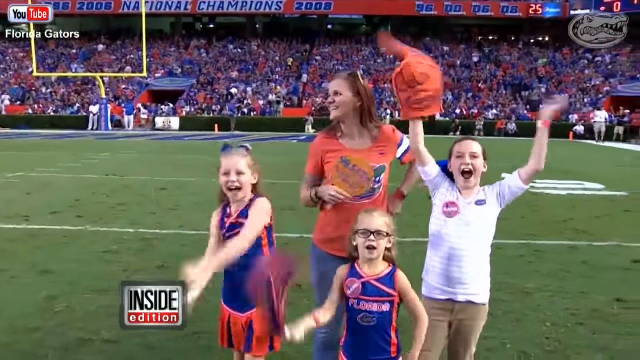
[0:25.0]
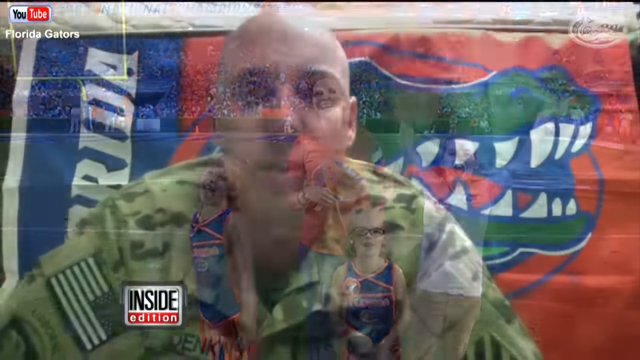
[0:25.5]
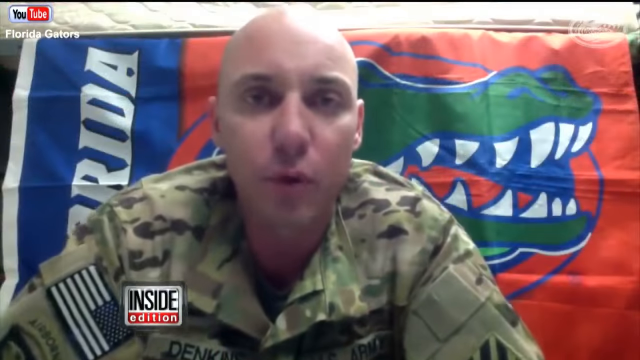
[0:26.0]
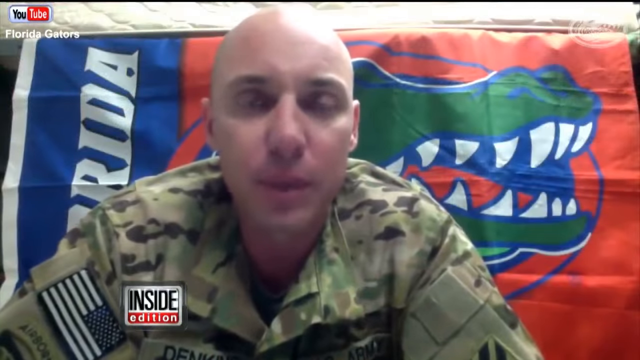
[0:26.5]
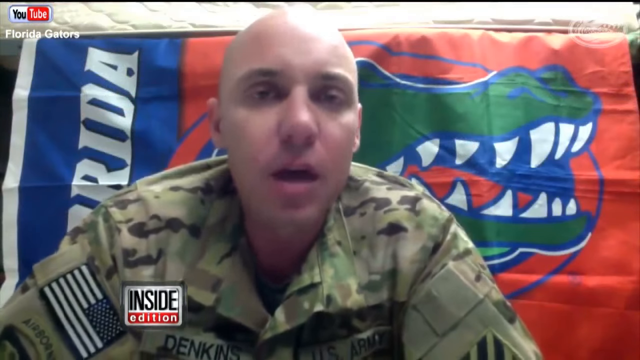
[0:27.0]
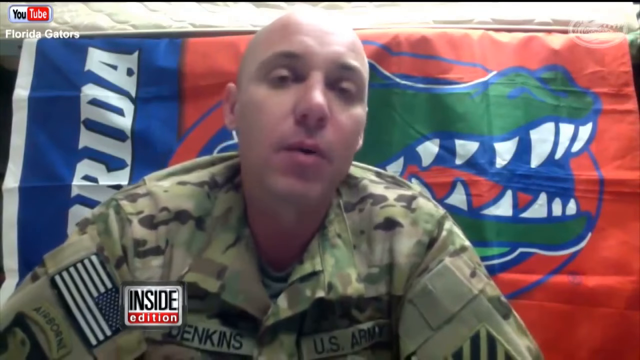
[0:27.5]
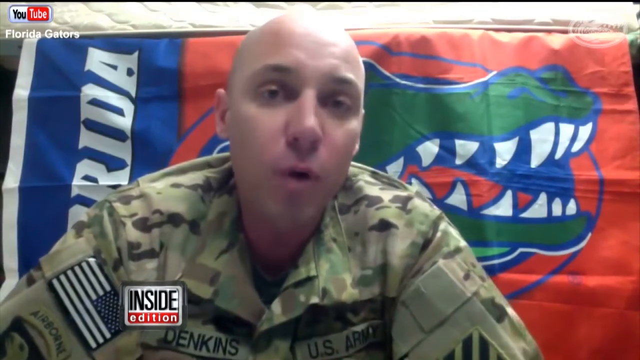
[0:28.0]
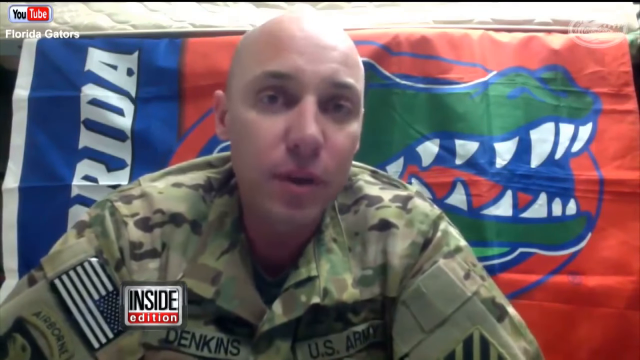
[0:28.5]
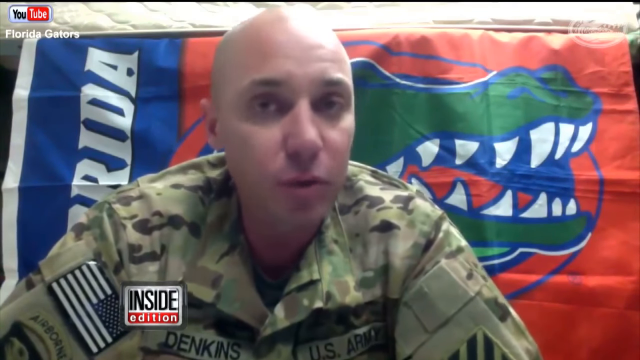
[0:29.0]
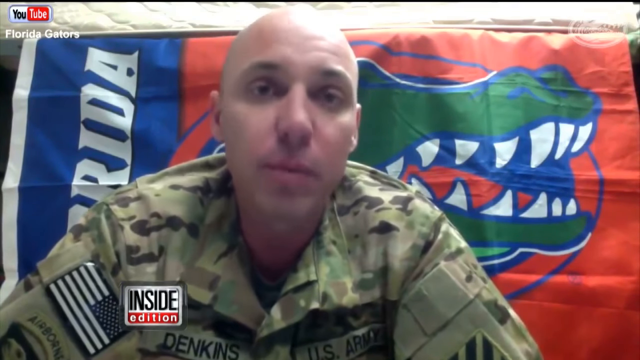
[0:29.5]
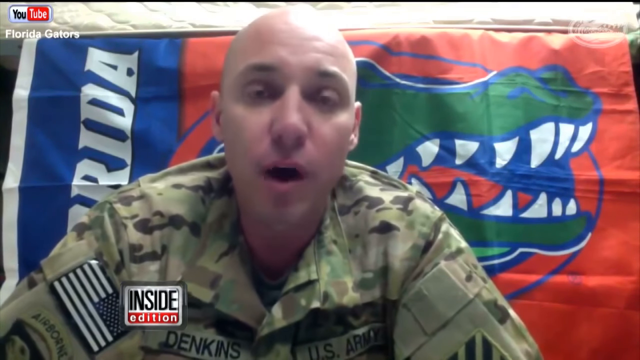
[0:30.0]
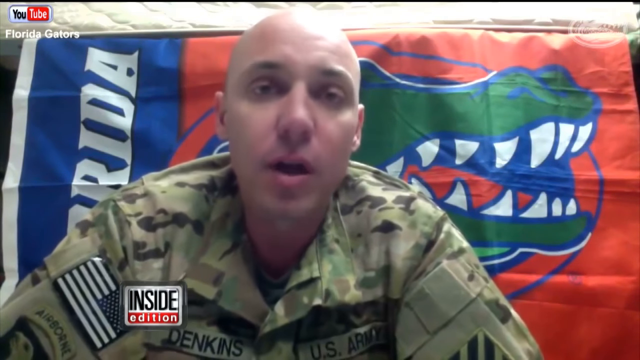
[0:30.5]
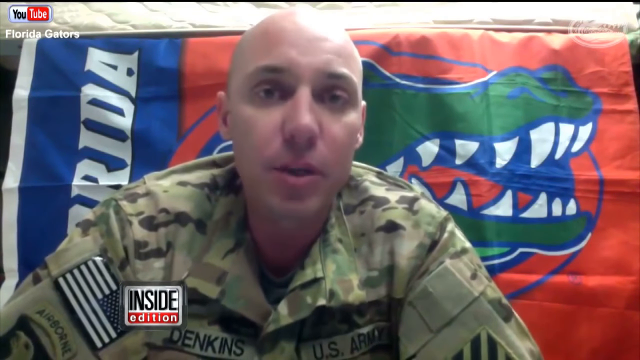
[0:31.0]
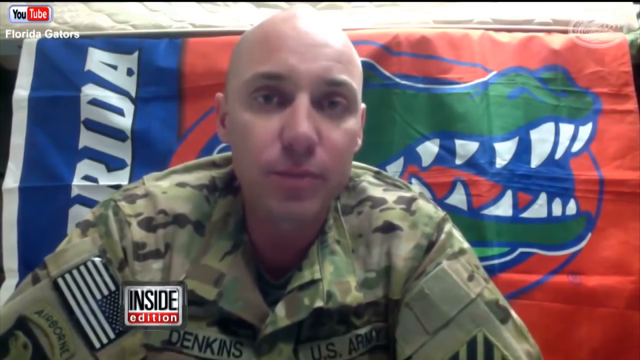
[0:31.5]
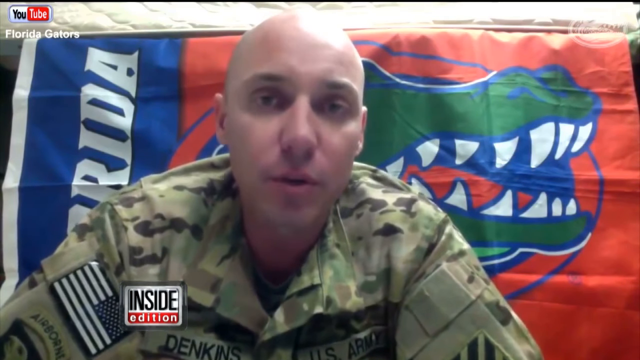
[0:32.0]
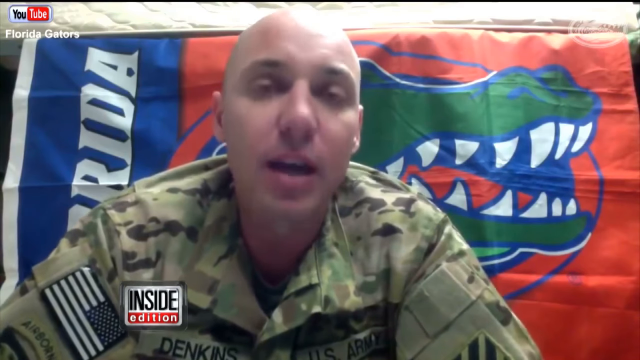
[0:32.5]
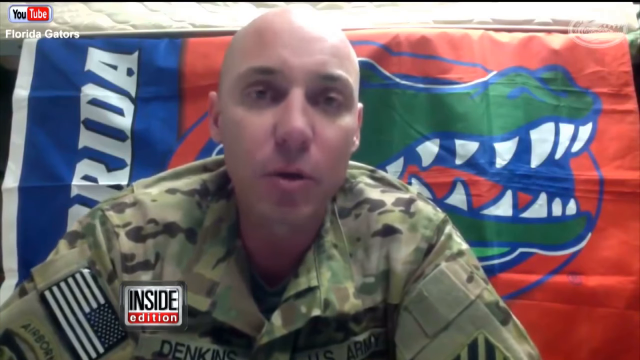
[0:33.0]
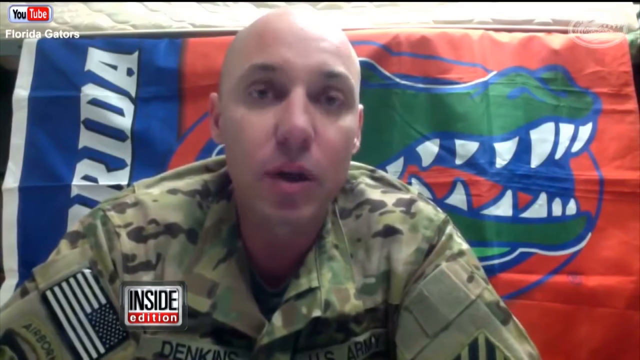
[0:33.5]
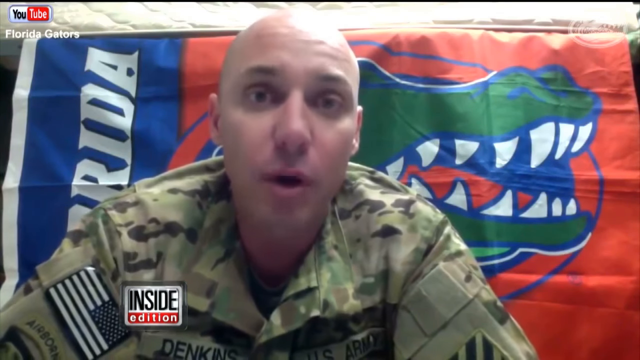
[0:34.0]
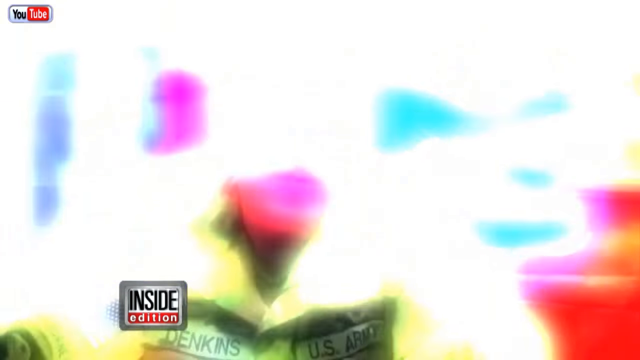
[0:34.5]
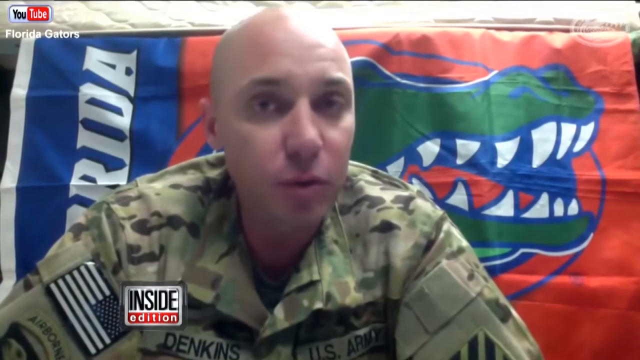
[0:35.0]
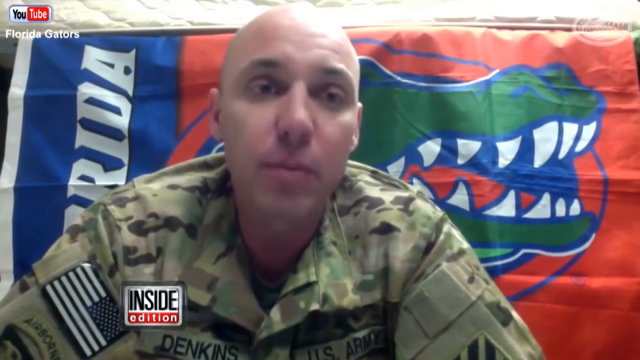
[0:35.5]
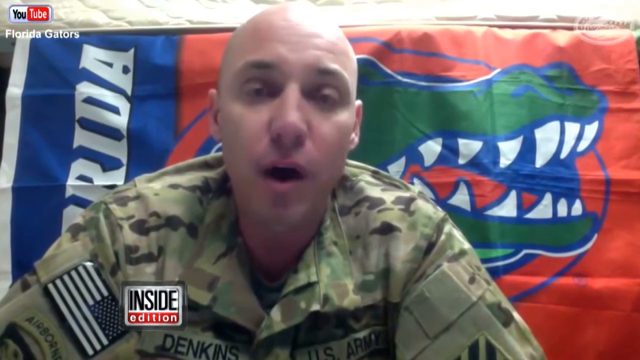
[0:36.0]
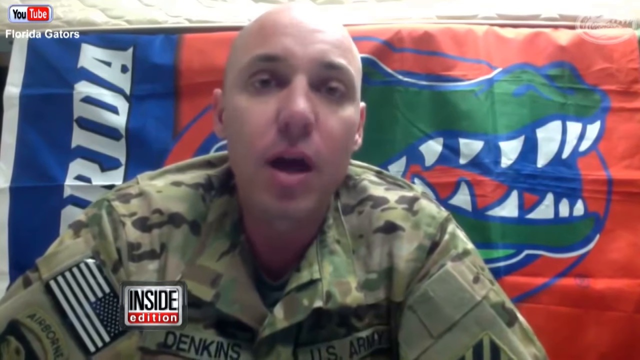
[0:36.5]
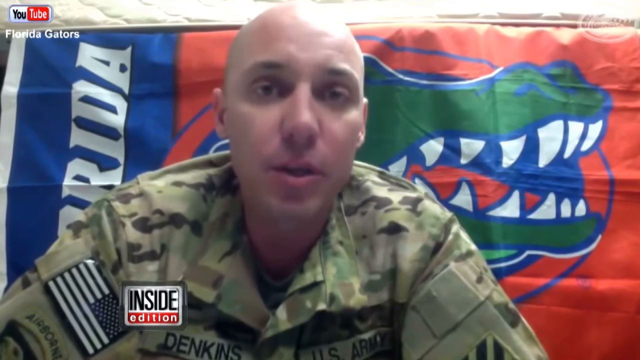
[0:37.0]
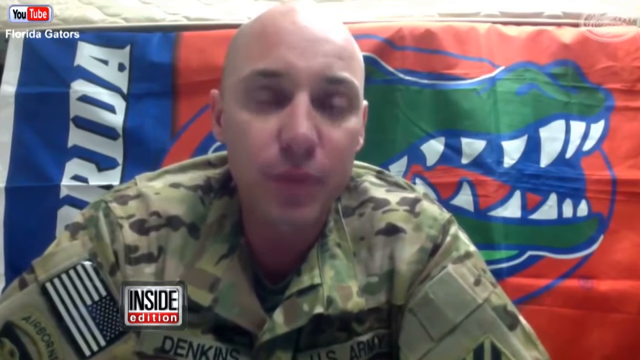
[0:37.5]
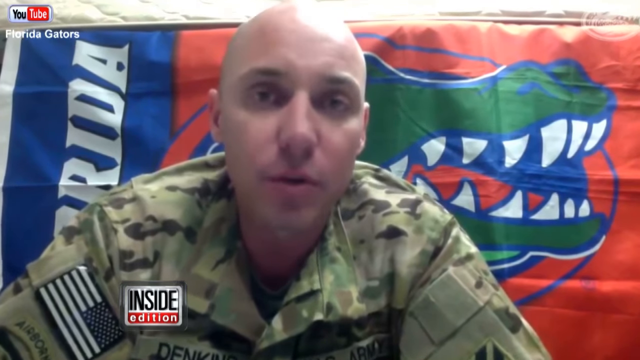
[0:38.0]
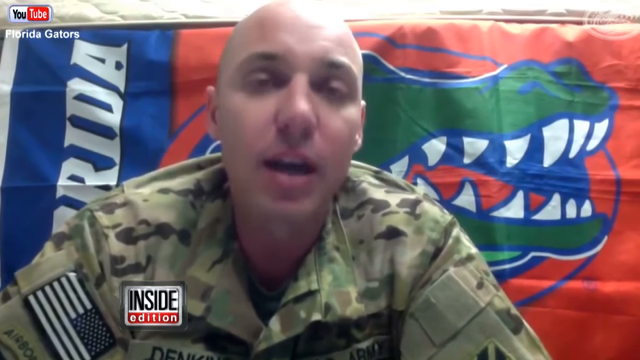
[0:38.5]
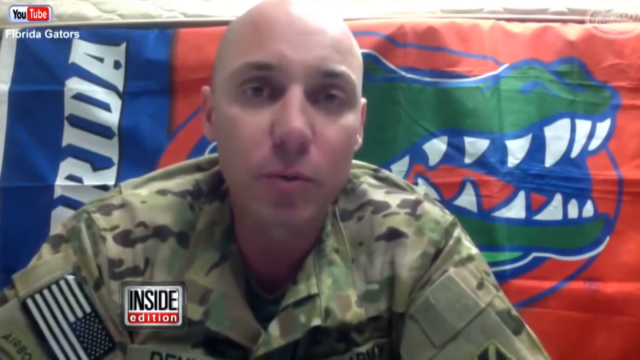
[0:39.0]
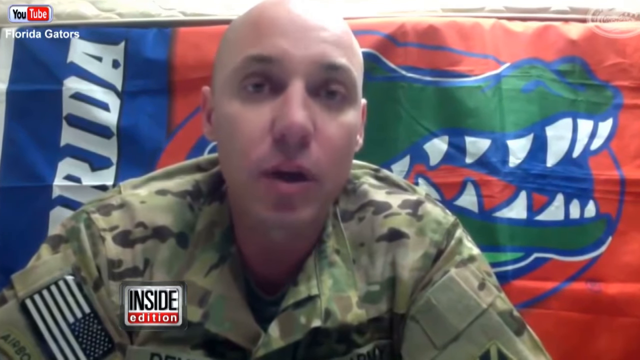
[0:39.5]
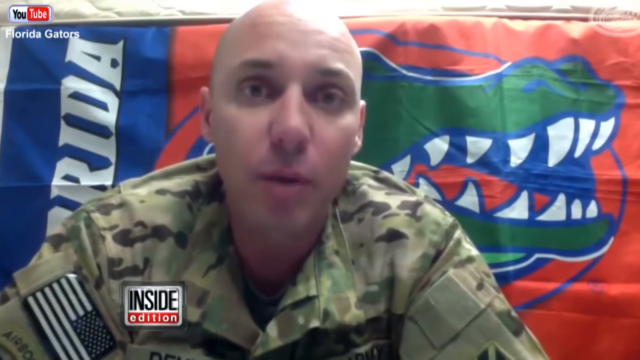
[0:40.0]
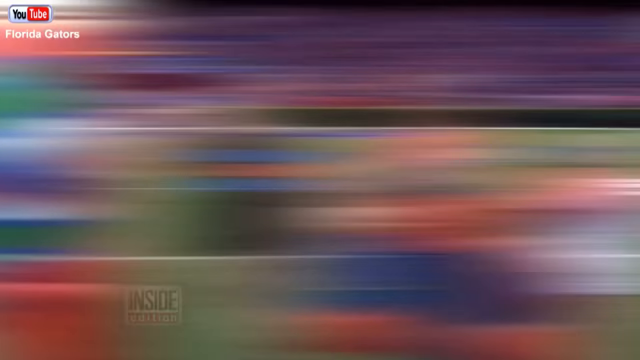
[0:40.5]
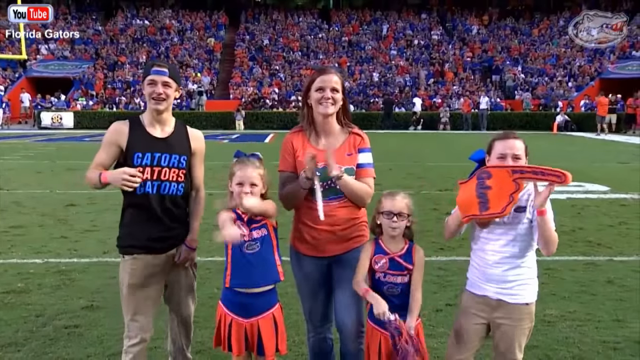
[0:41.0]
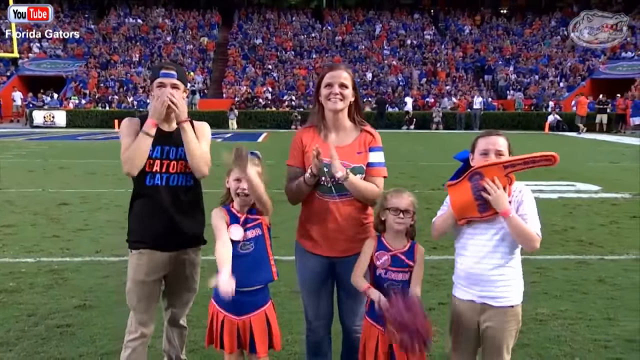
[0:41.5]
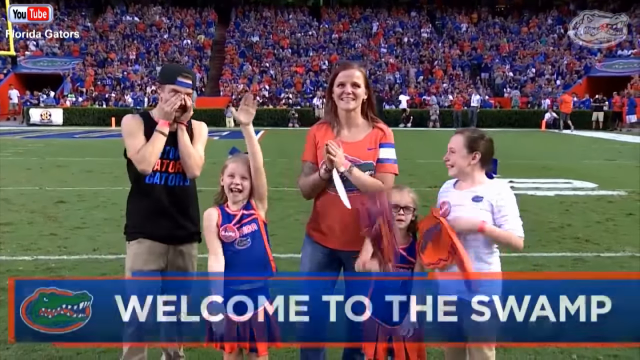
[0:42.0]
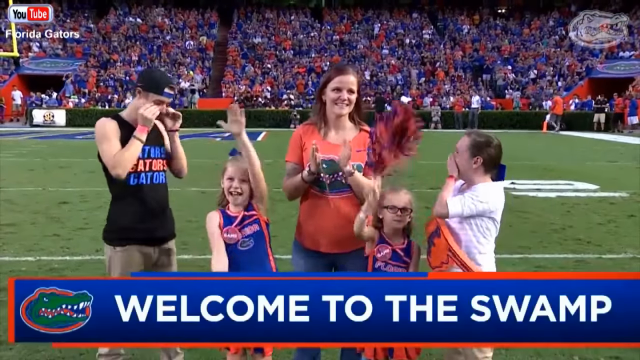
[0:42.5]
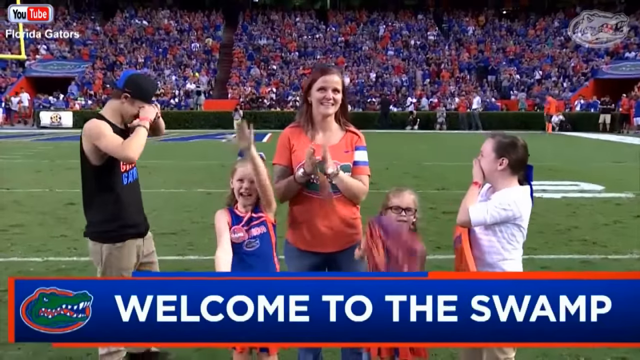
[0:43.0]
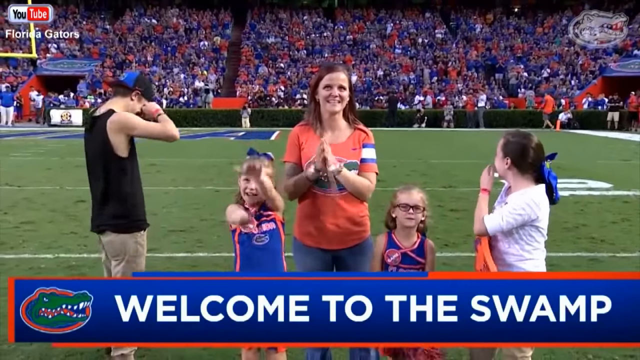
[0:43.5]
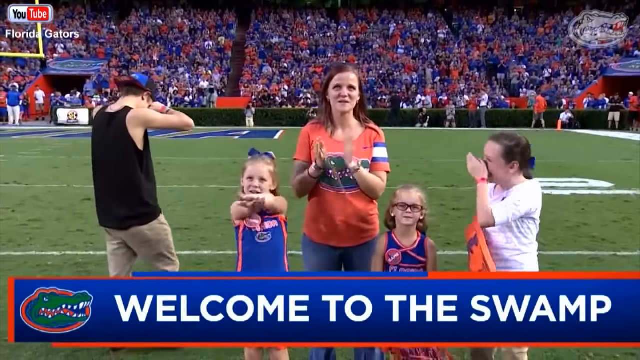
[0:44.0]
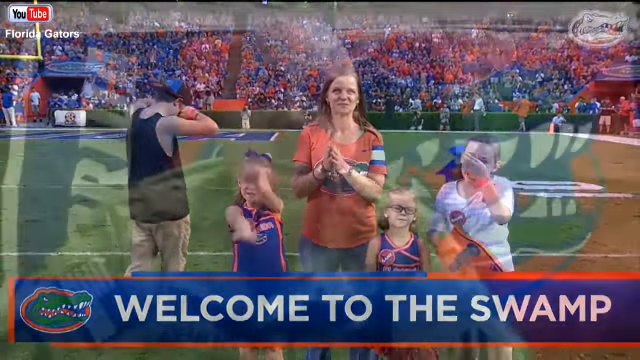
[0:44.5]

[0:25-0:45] A man who appears to be the father, a member of the military named Denkins, is shown, apparently in a video message to the family. A Florida Gators flag is behind him as he seems to deliver a heartfelt message. The video cuts back to the family, who are somewhat emotional: the son is crying and the older daughter is slightly crying as well. The two younger daughters seem somewhat oblivious; one does the Florida Gator chomp while the other stands looking at the screen. The mom is also looking at the screen. The father is then shown talking again in his video.